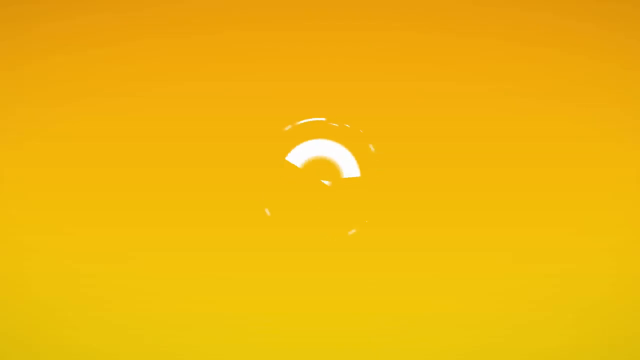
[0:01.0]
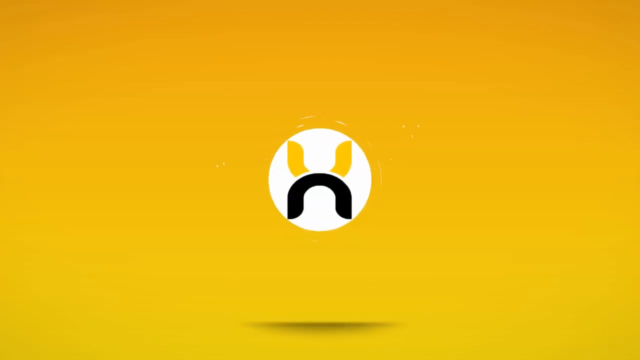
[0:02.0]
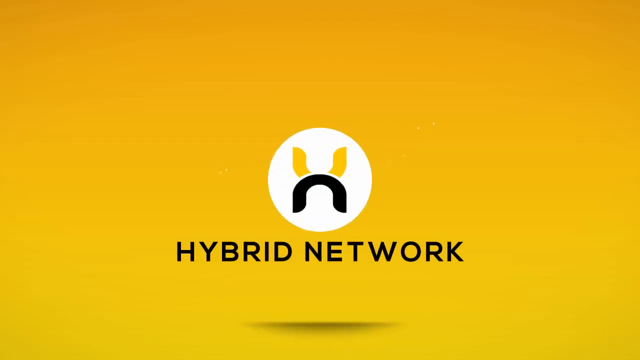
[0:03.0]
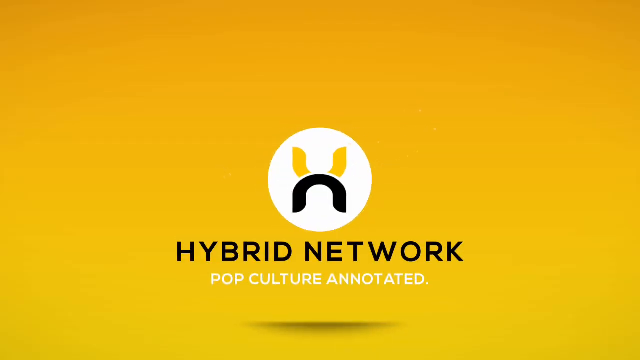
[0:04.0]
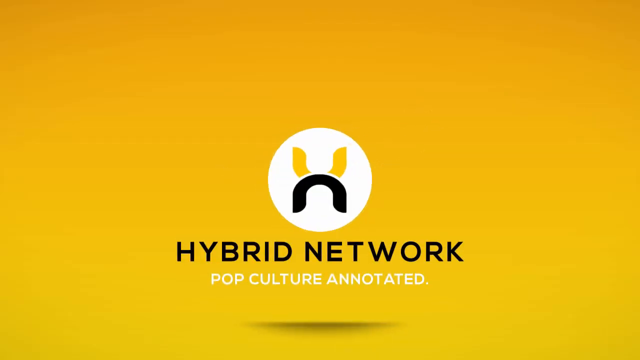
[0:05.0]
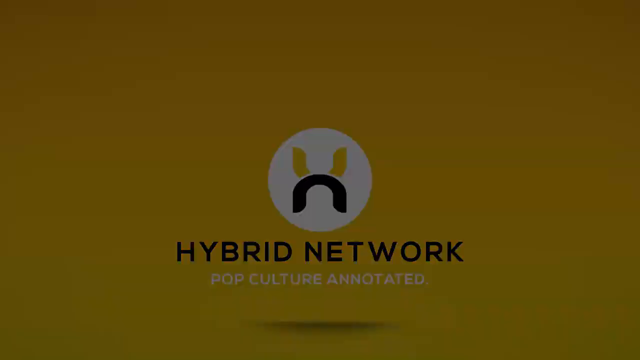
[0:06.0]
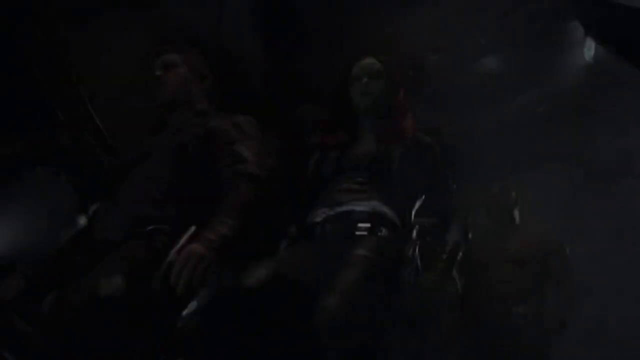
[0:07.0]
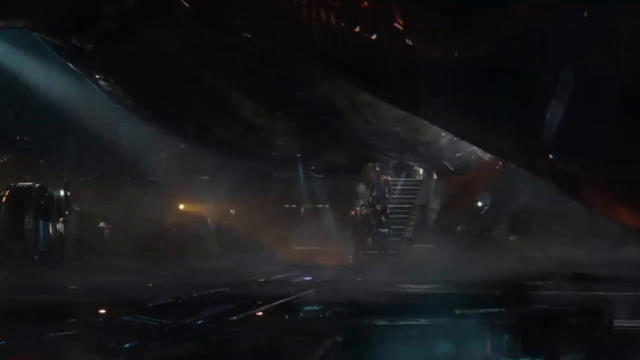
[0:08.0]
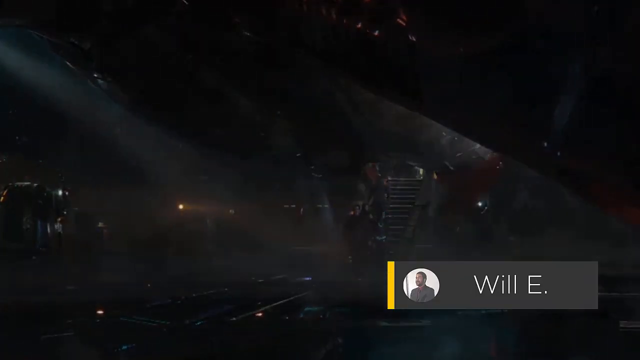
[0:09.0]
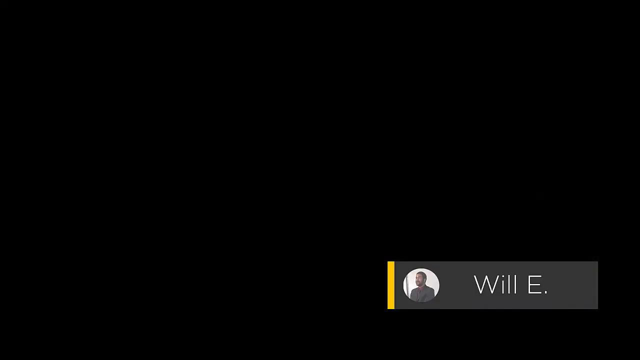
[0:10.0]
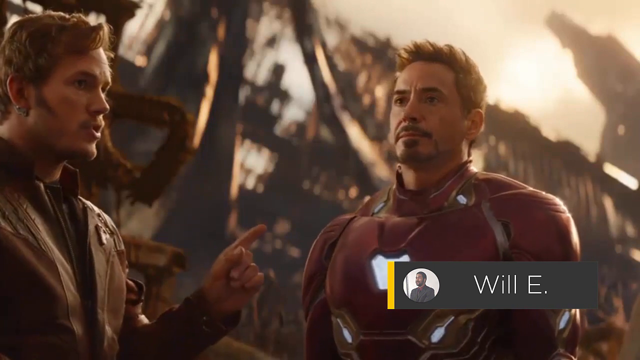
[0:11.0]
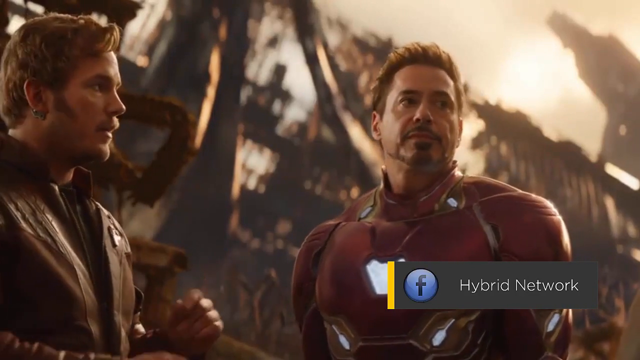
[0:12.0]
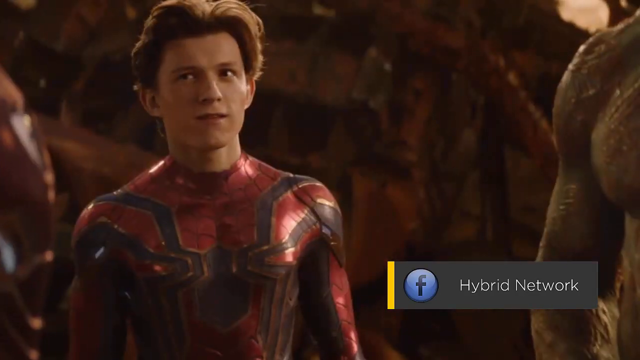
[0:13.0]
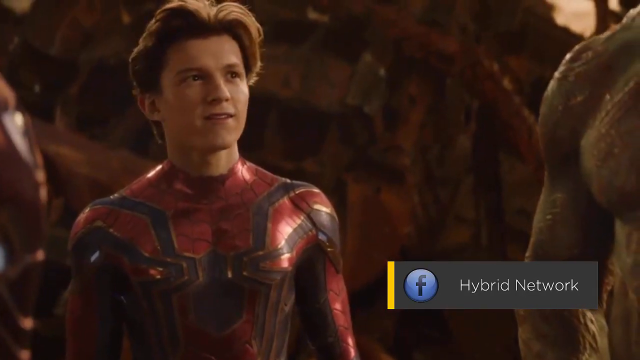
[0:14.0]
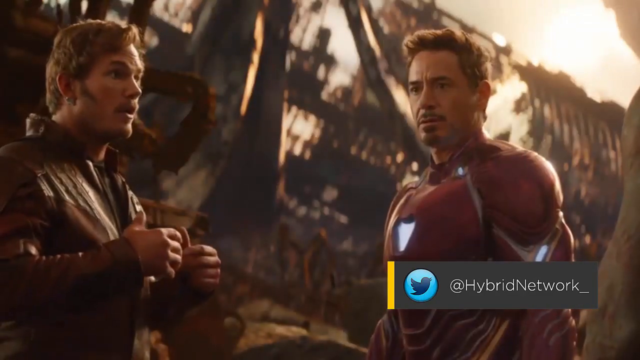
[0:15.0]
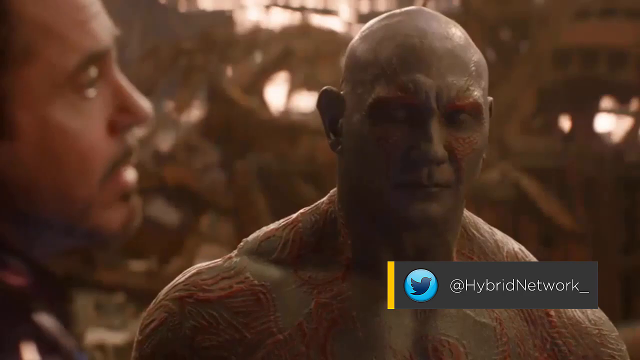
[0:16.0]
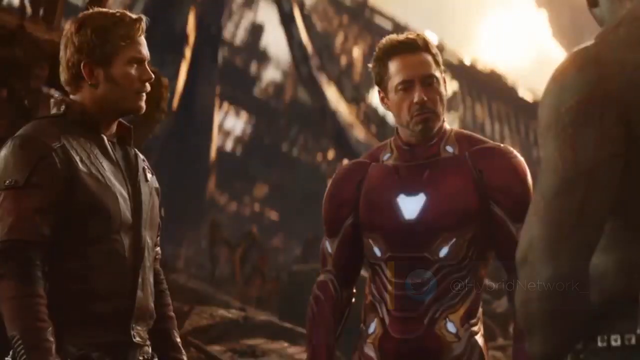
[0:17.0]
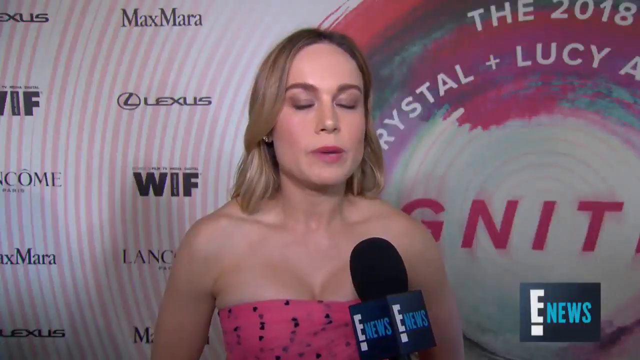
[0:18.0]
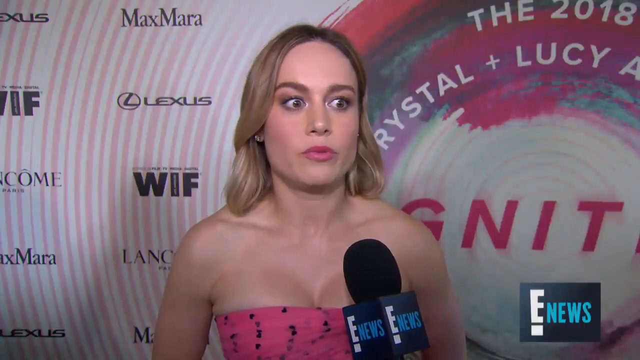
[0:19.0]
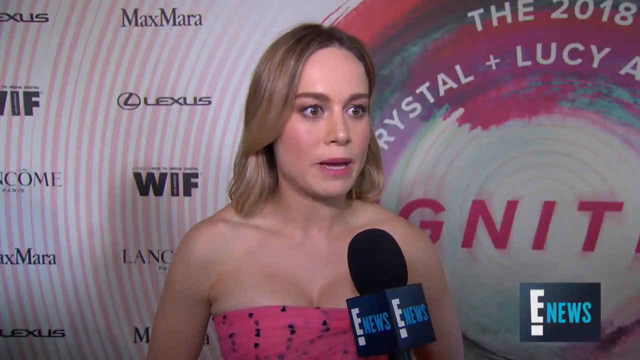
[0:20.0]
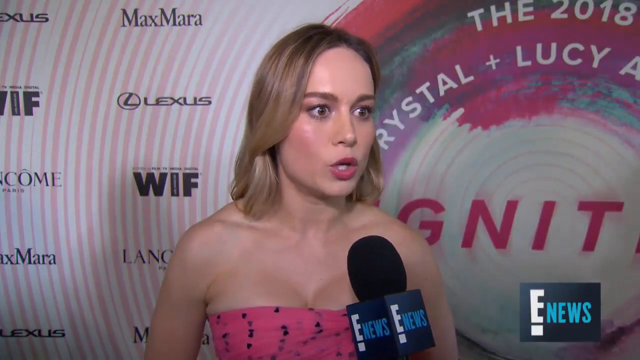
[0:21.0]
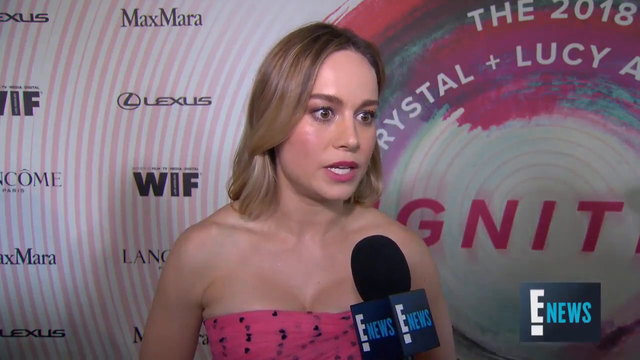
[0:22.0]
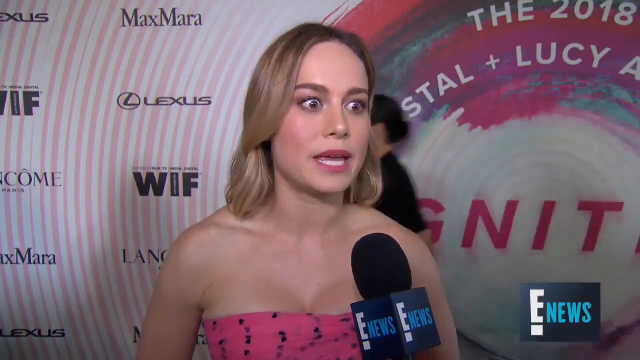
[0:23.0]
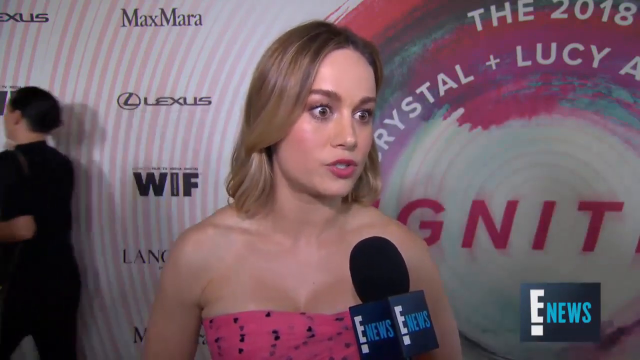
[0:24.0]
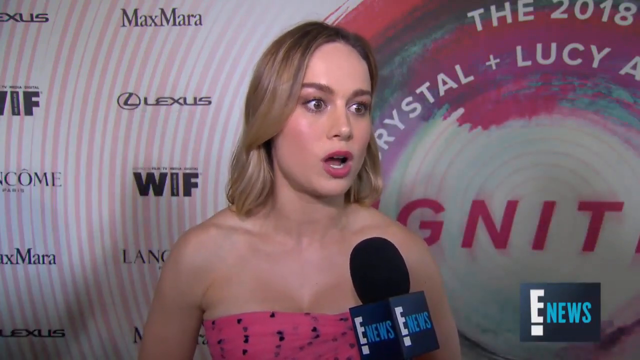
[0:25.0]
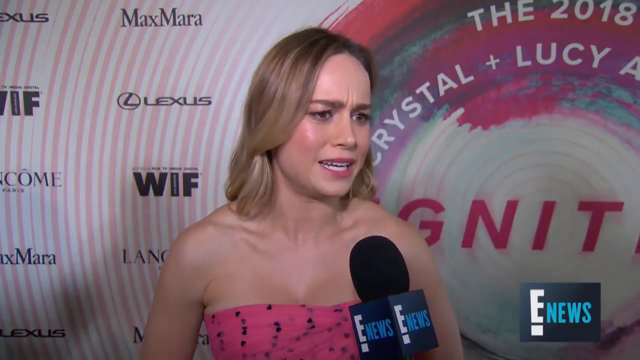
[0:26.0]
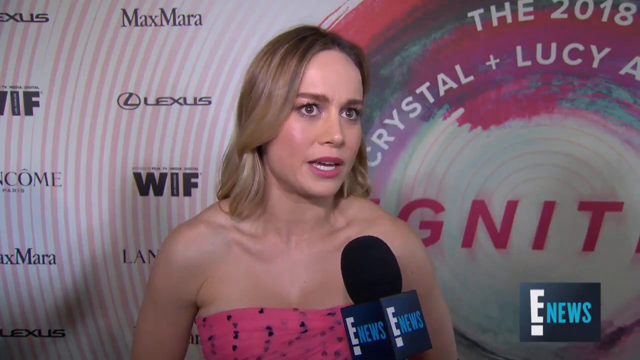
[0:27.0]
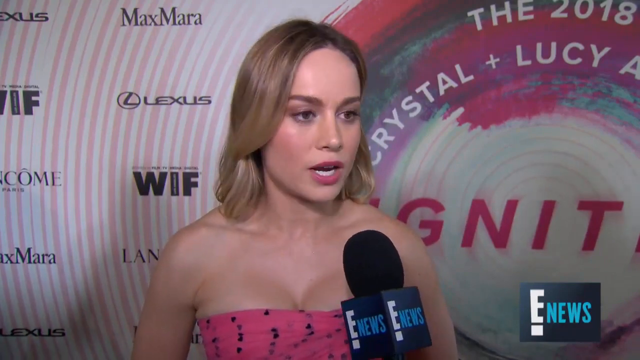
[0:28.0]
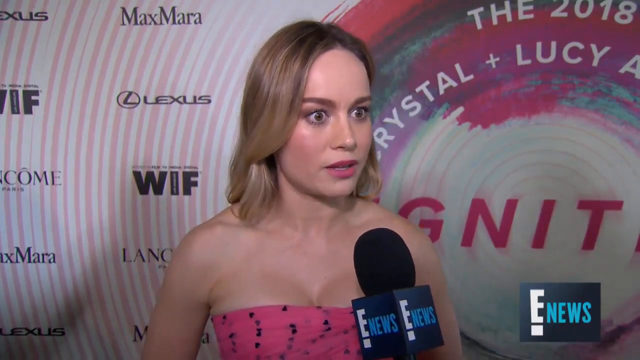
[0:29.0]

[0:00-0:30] The video starts on a black background that fades to a very bright yellow, which grades to a lighter yellow and then into black. In the middle is a white circle holding a symbol that is half yellow and half black and looks like a right-side-up U and an upside-down U put together. Black text reads "hybrid network", and there is also the text "pop culture annotated". The screen fades to black, and then a scene shows people walking into some type of spacecraft, possibly a scene from Guardians of the Galaxy. It is very dark with very minimal light and a little of what looks like smoke. In the bottom corner there is a picture of a person with a label. Next is a picture of Robert Downey Jr. in the Iron Man costume next to Chris Pratt, the main character from Guardians of the Galaxy, and they talk back and forth. They then turn to Spider-Man and look over at him while still talking, and then the bodybuilder man appears. The video then cuts to an interview with an actress standing behind a step and repeat.